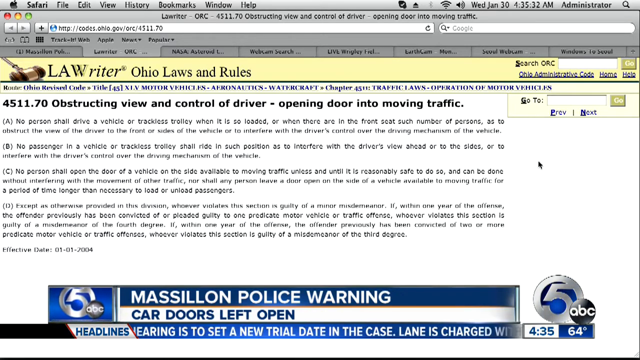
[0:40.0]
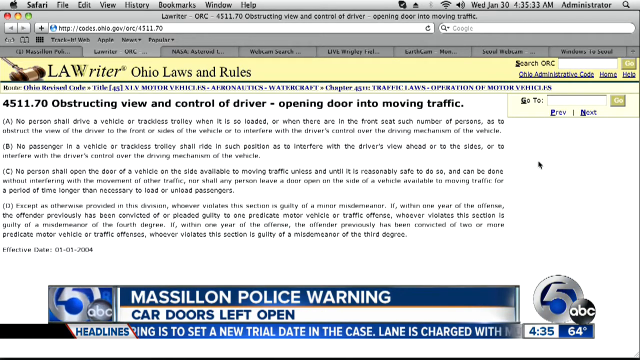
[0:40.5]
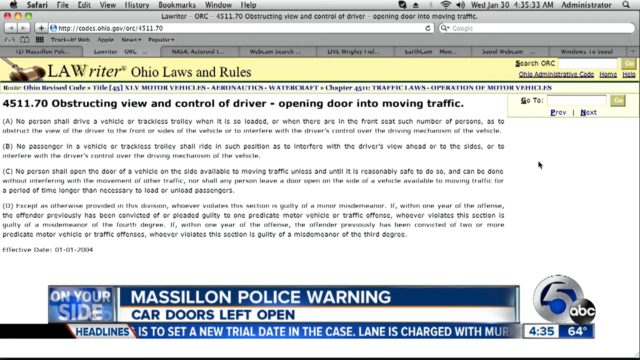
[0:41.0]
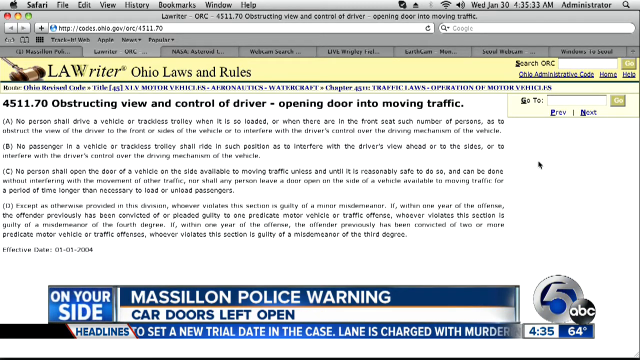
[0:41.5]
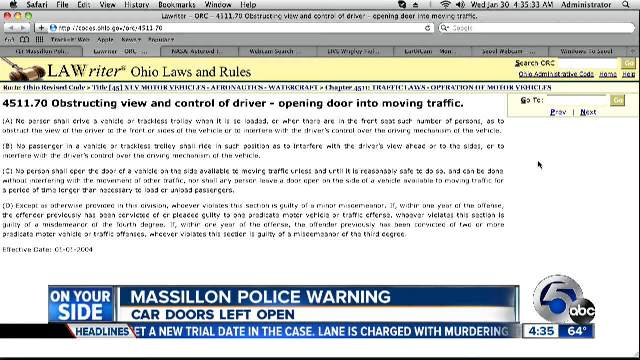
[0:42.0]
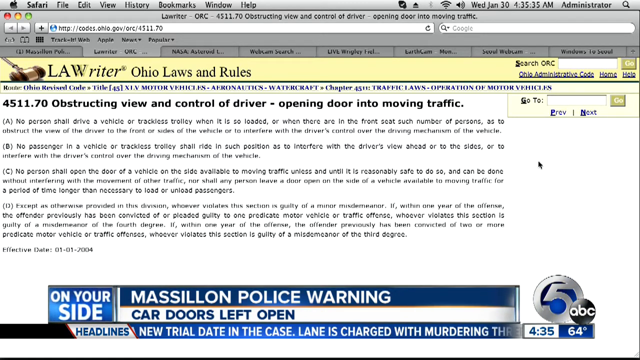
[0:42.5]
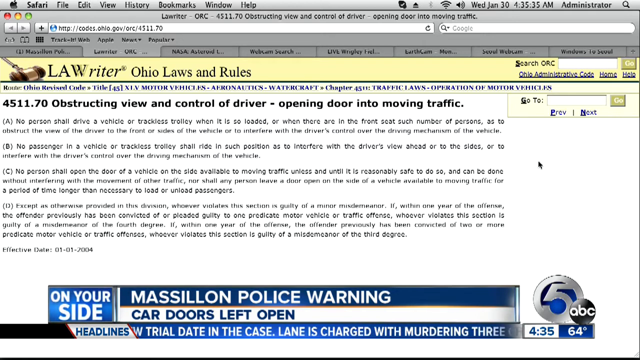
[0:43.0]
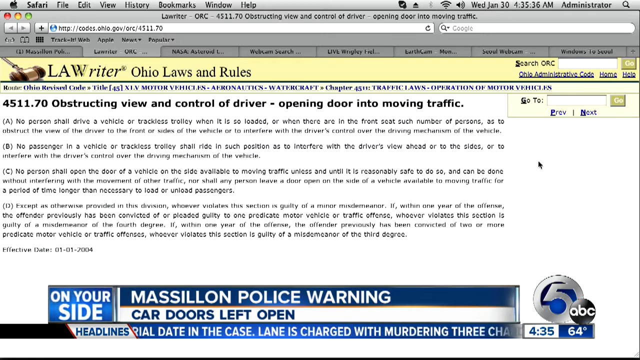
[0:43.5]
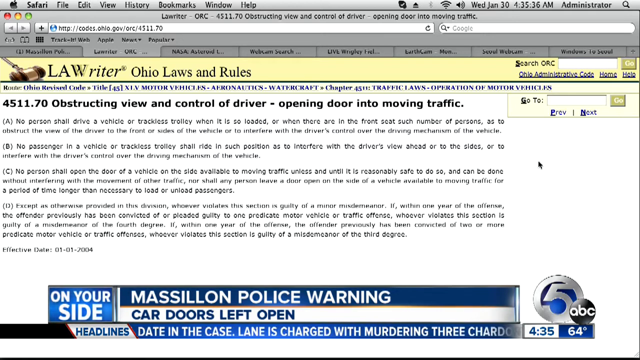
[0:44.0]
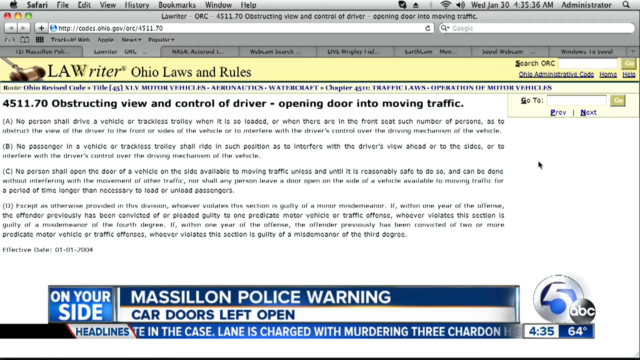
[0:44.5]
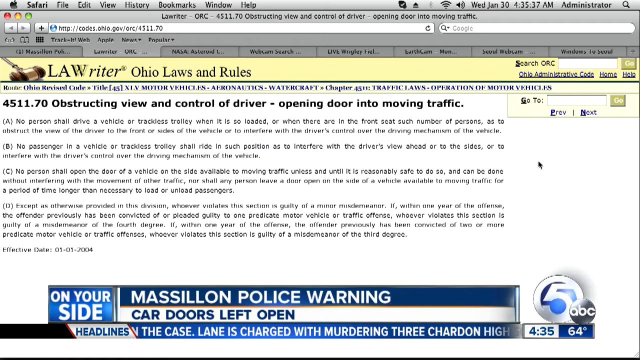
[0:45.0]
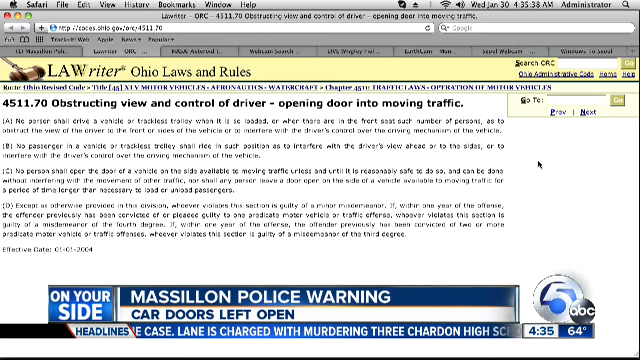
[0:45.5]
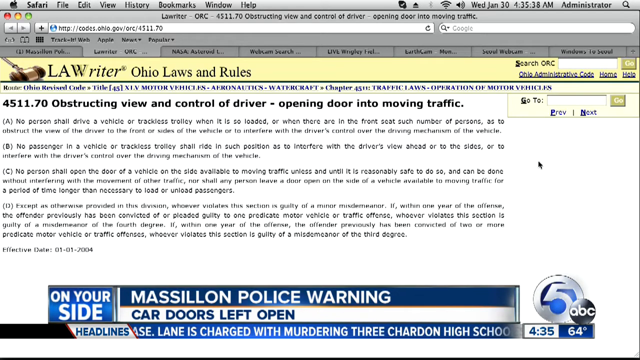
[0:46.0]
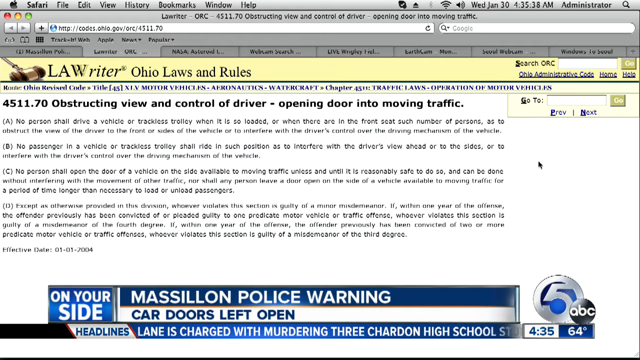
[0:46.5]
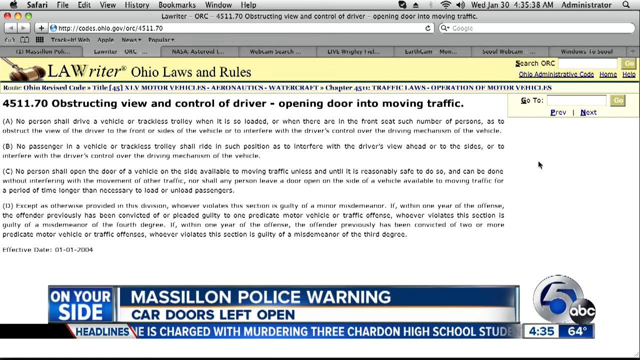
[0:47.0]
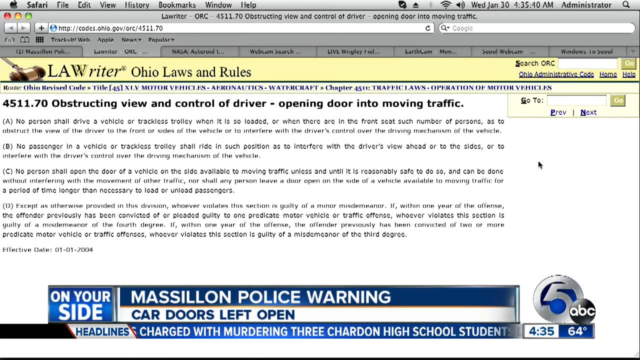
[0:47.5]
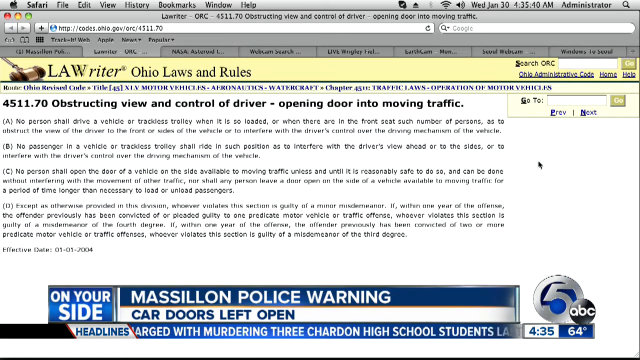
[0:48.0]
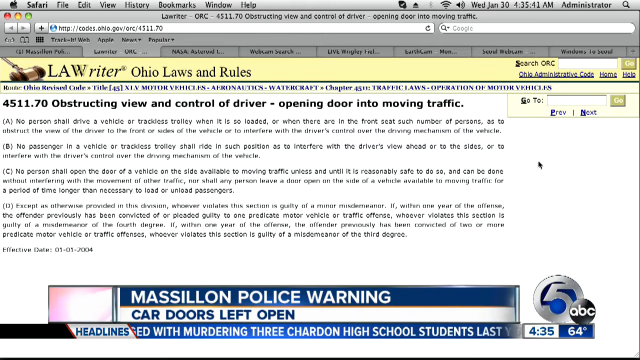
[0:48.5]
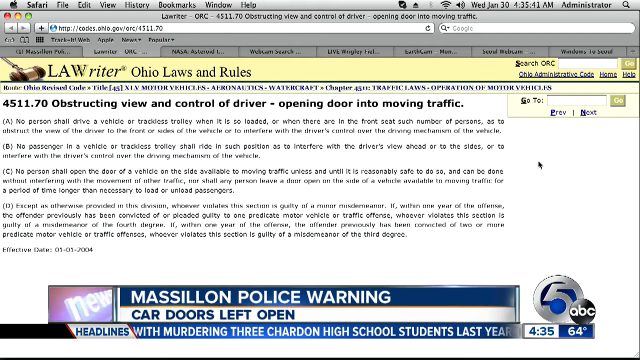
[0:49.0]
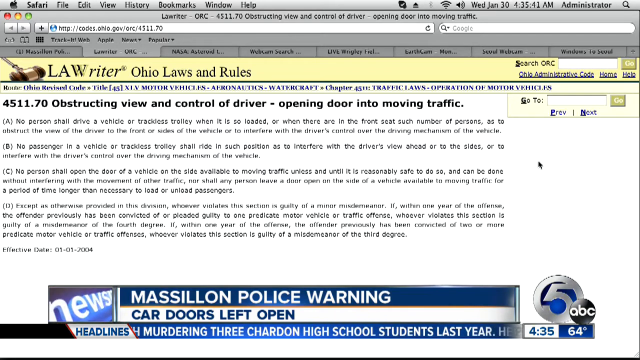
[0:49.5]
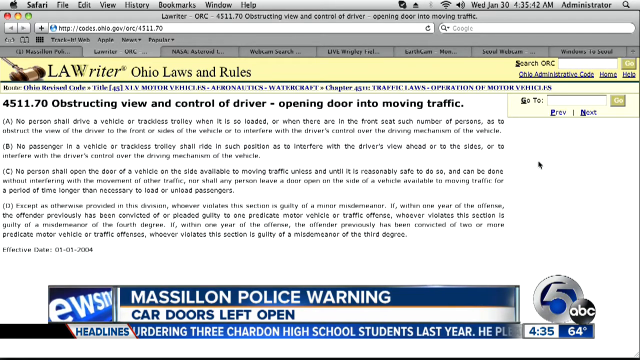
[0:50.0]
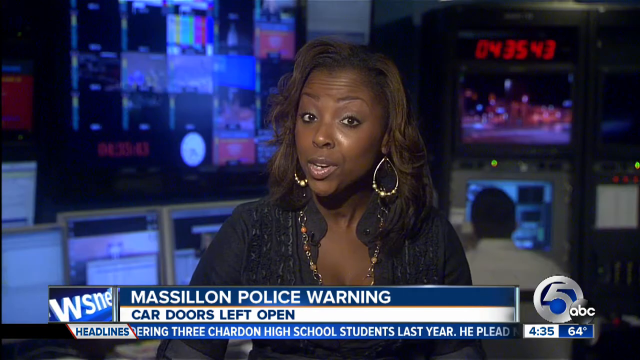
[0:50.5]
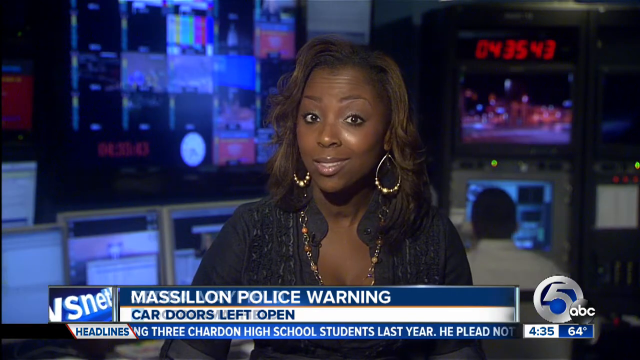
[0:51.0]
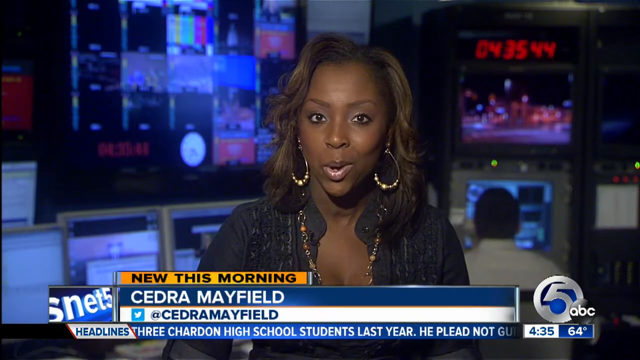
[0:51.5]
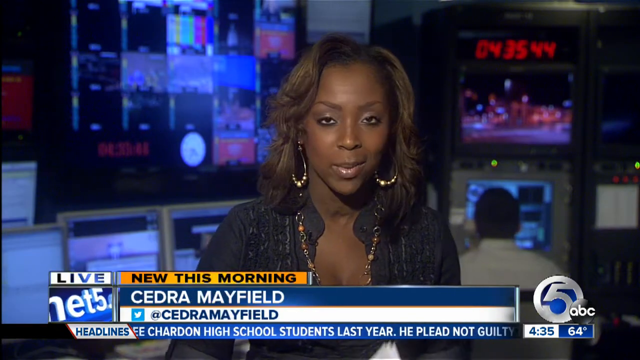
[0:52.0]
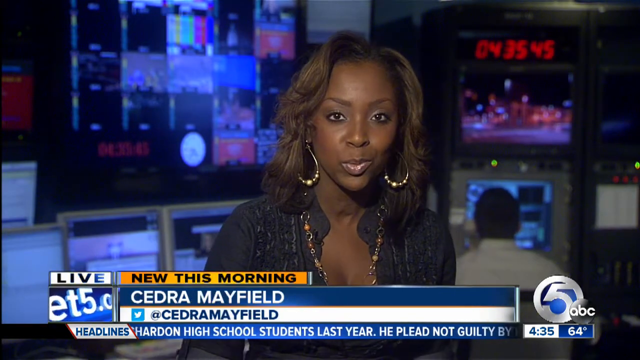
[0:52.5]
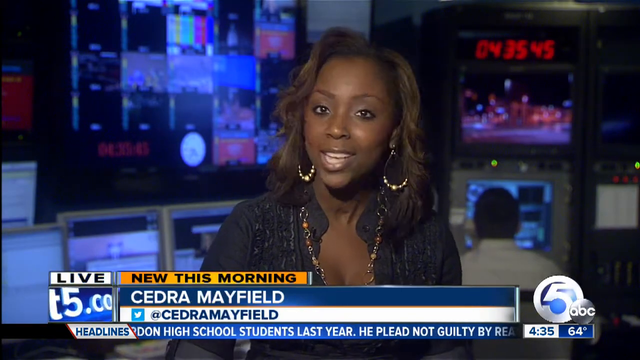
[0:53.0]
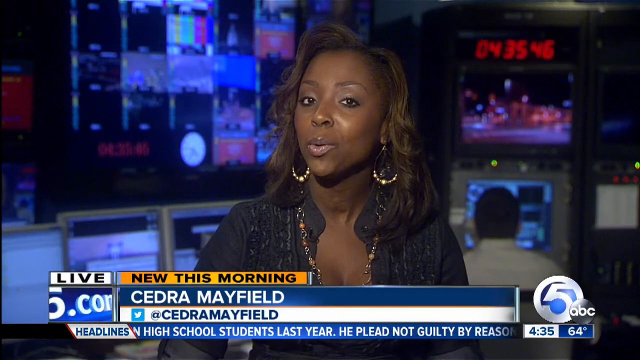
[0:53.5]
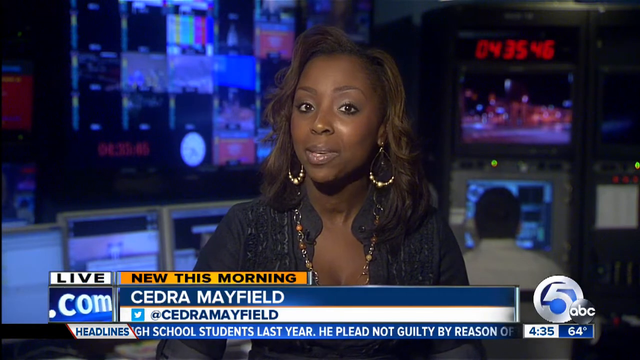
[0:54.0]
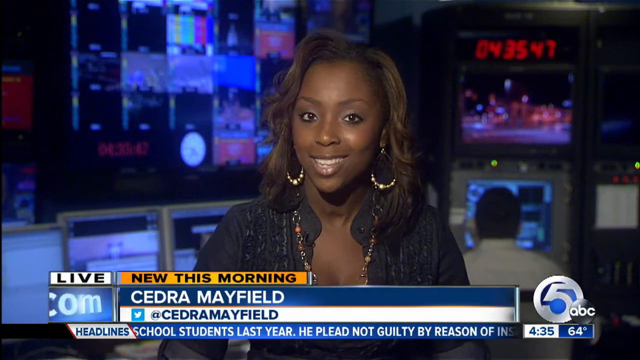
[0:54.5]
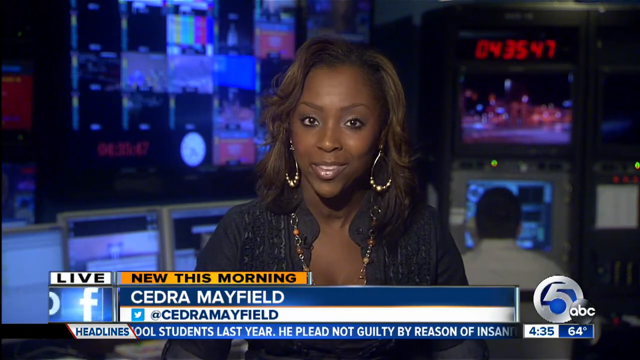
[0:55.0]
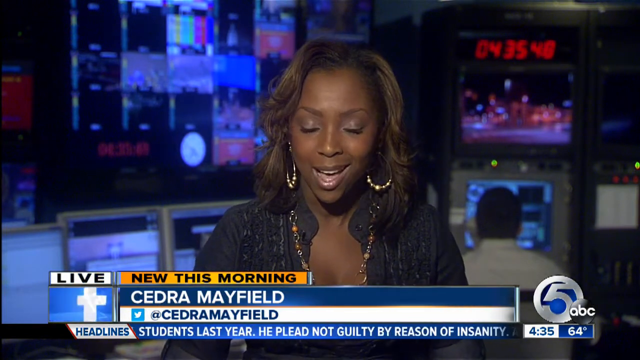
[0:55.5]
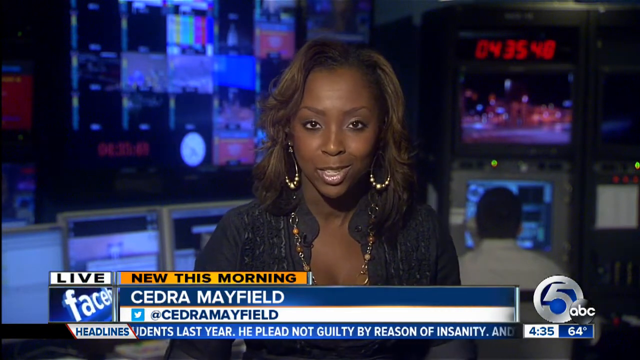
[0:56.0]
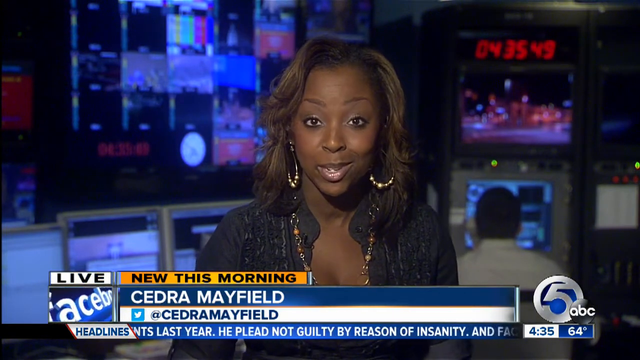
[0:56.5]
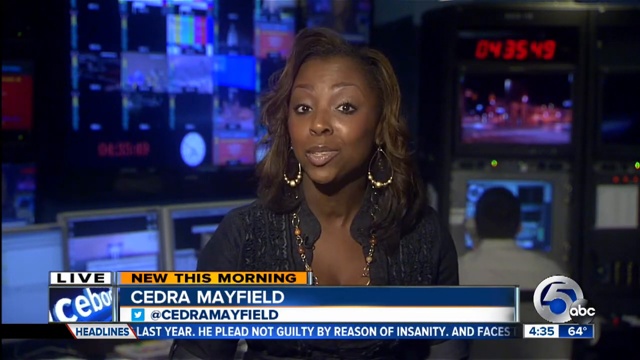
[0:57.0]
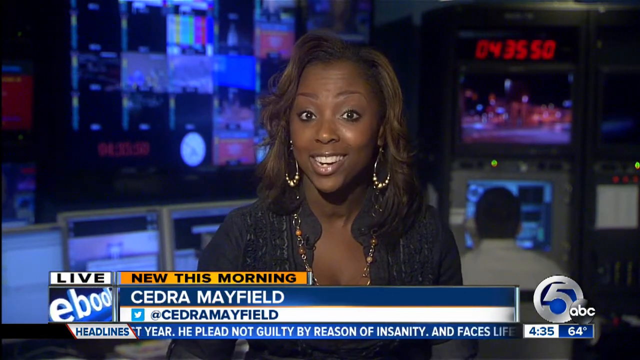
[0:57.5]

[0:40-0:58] The law website referenced for the news story is shown, titled "Law Writer" and "Ohio Laws and Rules". It displays the specific law "4511.70 obstructing view and control of driver-opening door into moving traffic", followed by a brief explanation of the law and how it is interpreted. The video then returns to the reporter in the newsroom, where her name and social media handle are visible again. She seems to be saying her last several sentences, and then the video cuts off instantly with no sign-off or transition back to the main anchor. The Channel 5 animation is visible again on the left side of the lower thirds: the logo pops up, followed by an animation reading "On Your Side" in white lettering, with a blue-looking animation behind it. The headlines are still scrolling along the bottom.